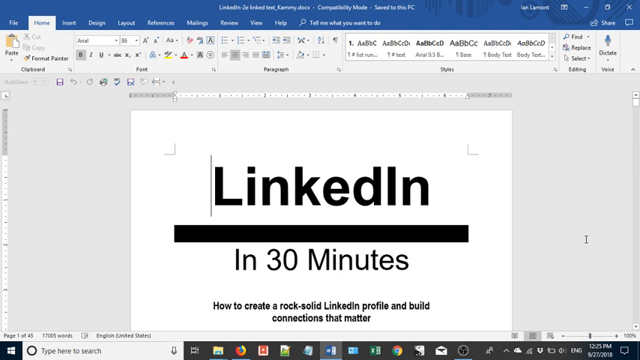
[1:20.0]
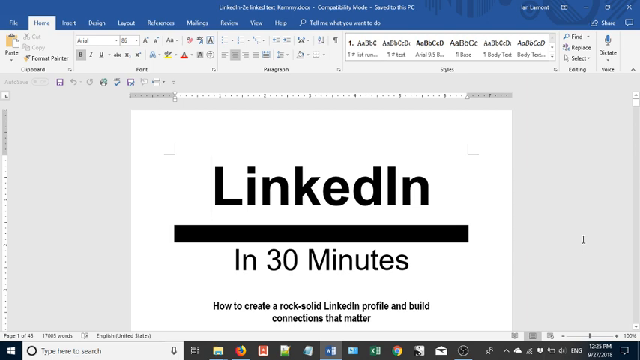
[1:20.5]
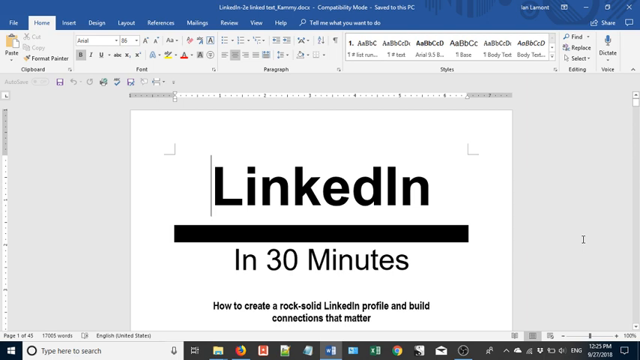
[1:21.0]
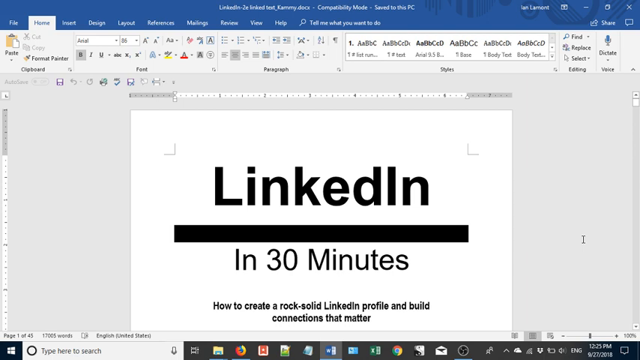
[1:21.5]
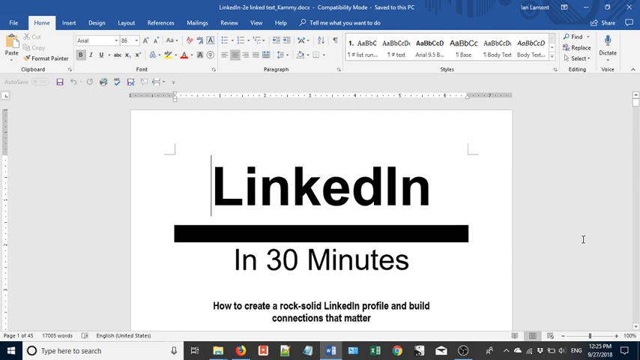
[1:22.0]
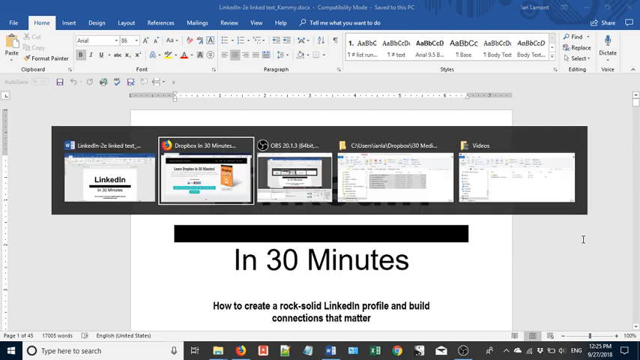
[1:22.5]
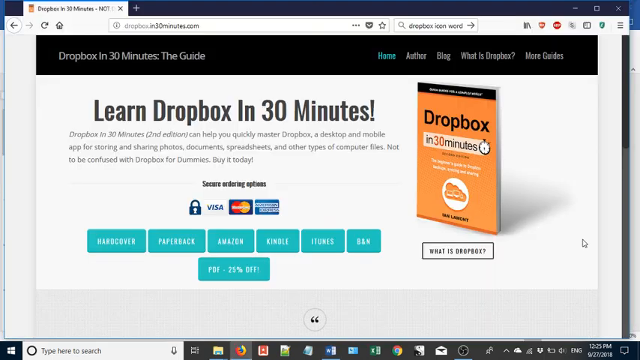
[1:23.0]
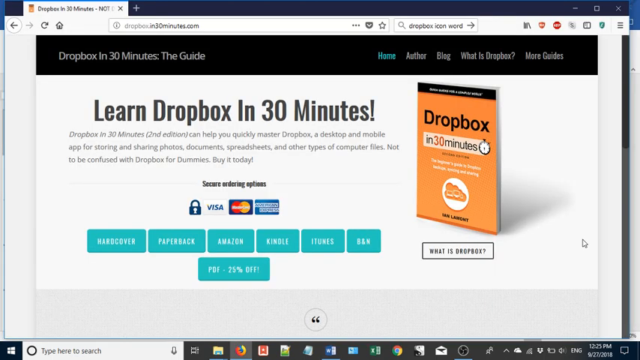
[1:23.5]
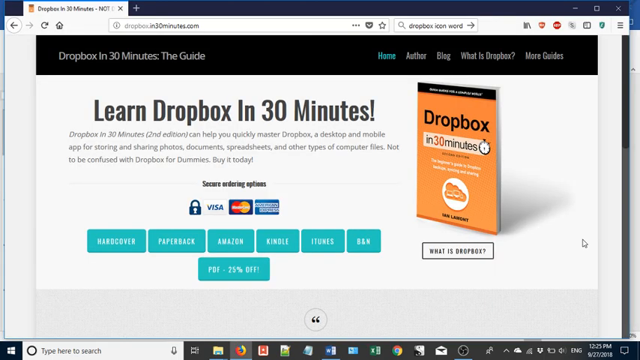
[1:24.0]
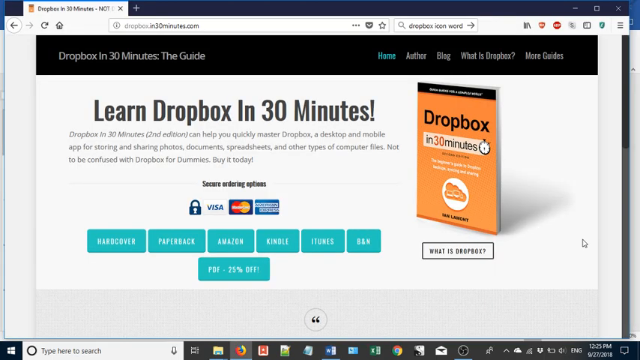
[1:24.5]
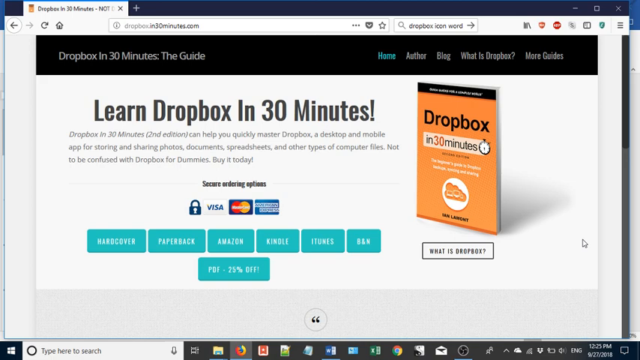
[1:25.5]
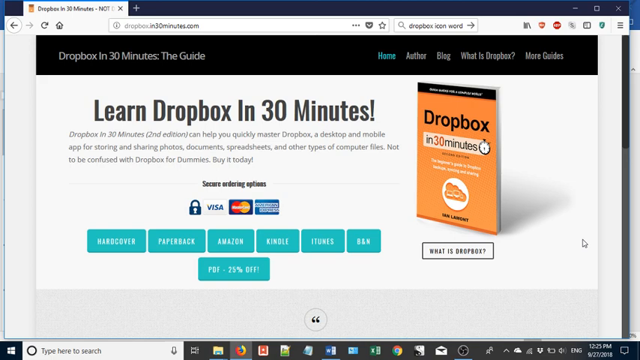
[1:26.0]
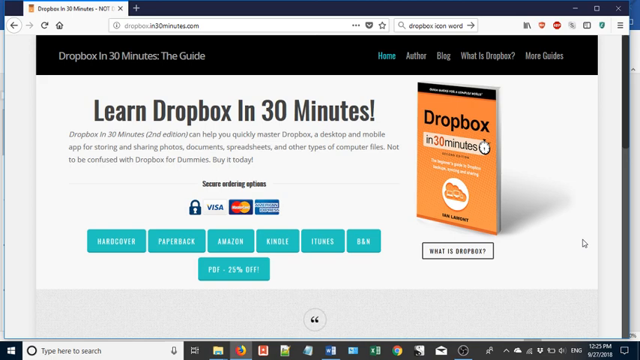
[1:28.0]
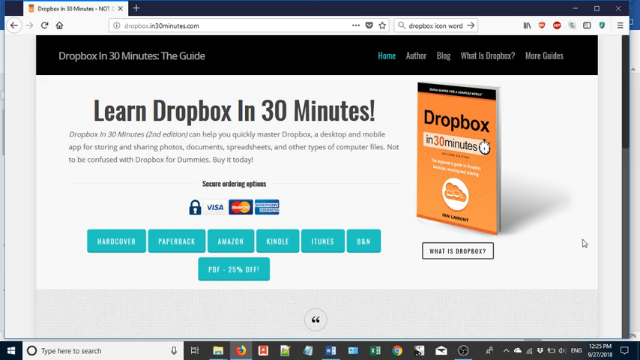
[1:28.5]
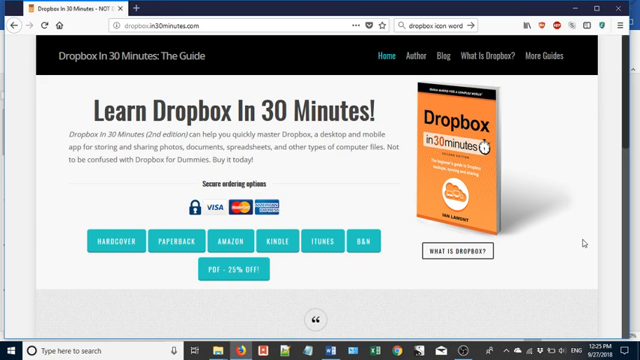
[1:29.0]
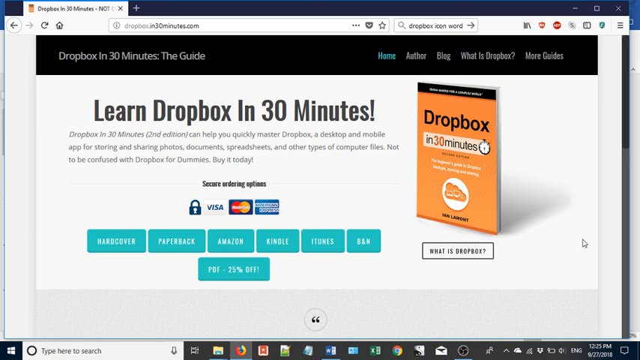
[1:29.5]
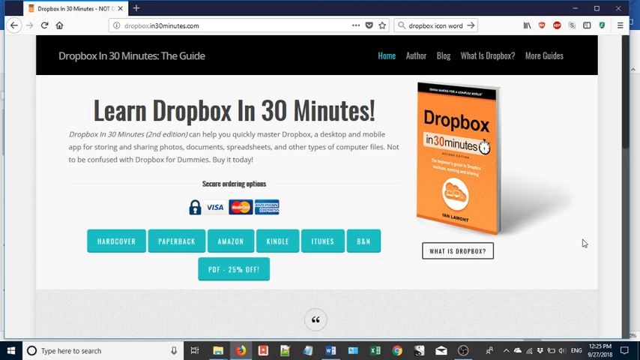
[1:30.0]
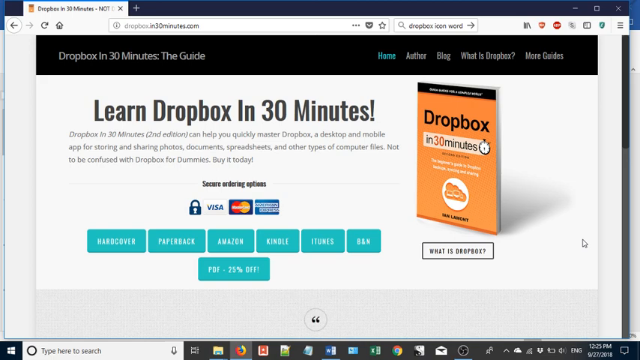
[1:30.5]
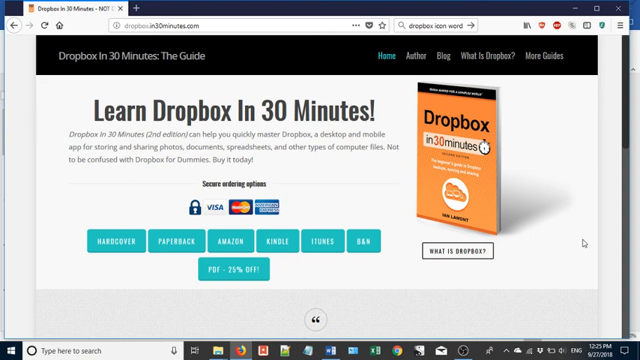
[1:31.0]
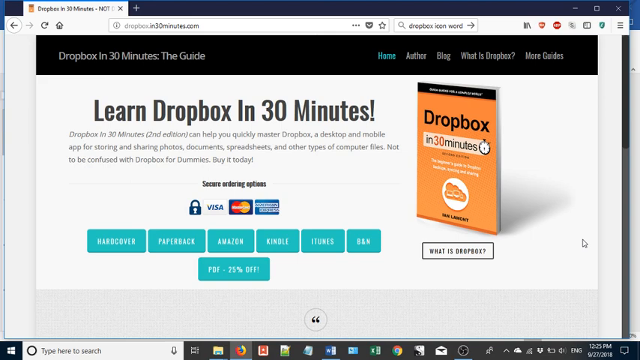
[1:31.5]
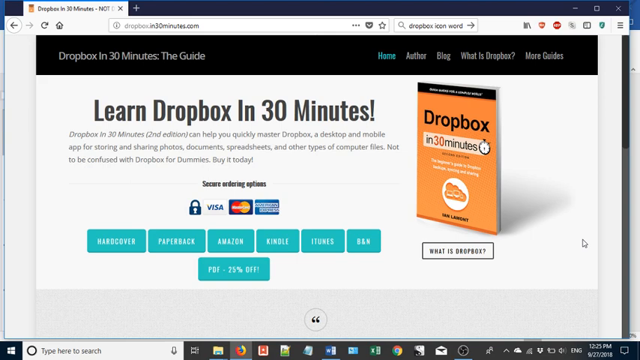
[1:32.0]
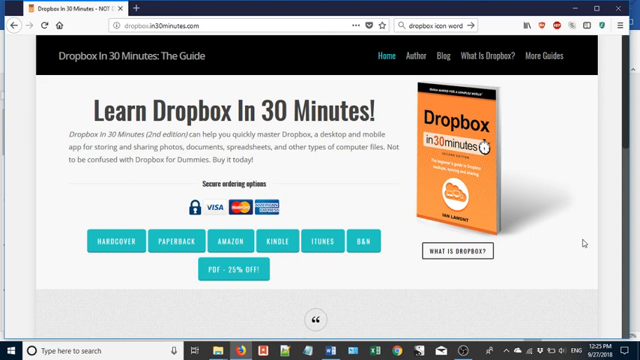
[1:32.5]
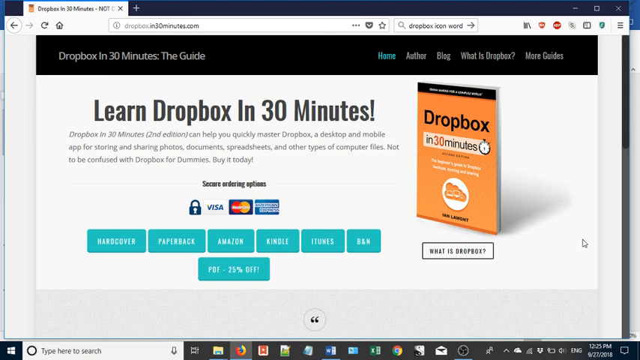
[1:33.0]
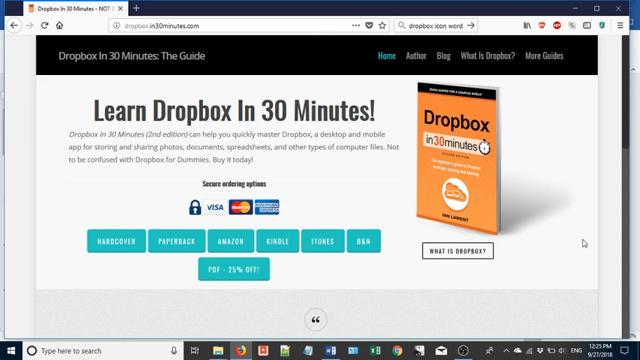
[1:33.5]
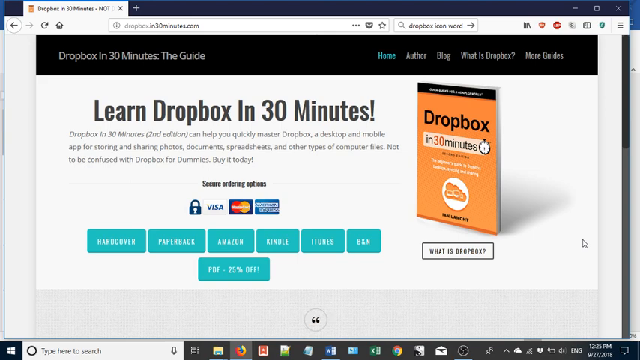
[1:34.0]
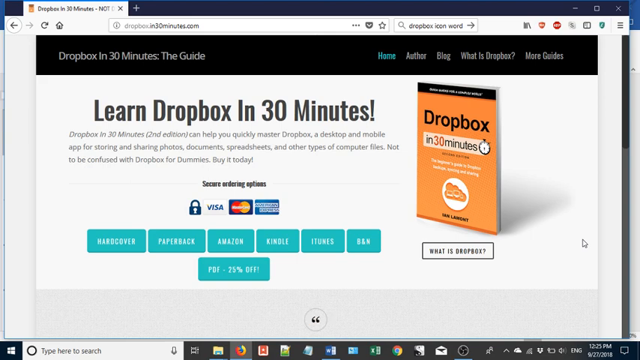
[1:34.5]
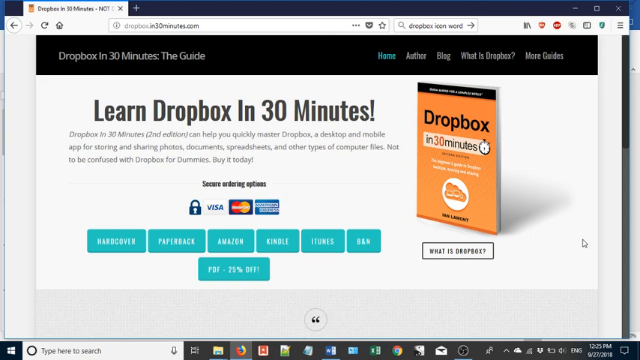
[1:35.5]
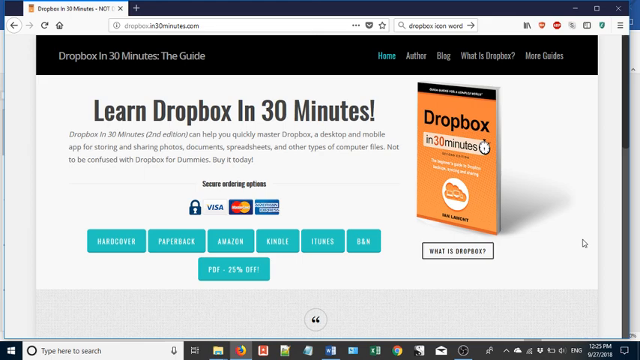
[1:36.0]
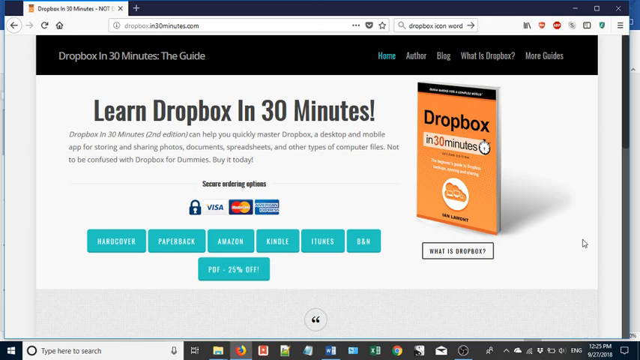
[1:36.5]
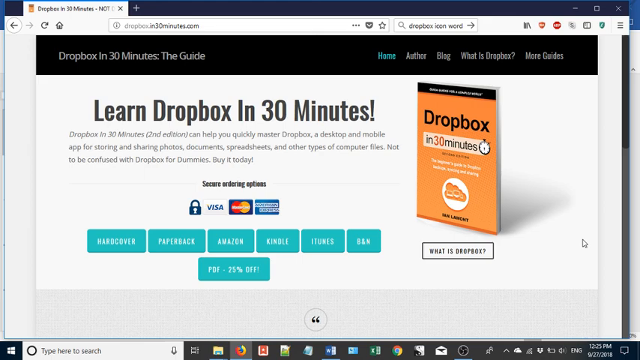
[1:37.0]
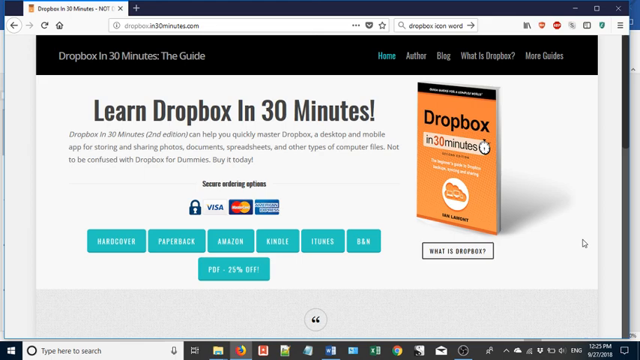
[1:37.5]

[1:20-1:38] The LinkedIn in 30 Minutes page, "How to create a rock-solid LinkedIn profile and build connections that matter," is shown in its design view. At the top are "files," "home," "insert," "design," "layout," "references," "mailings," "review," "view," "help," and "tell me what you want to do," along with paste, format painter, clipboard, copy, and cut options, different fonts, and different colors. The view then moves to the next page, "learn Dropbox in 30 minutes," their website.